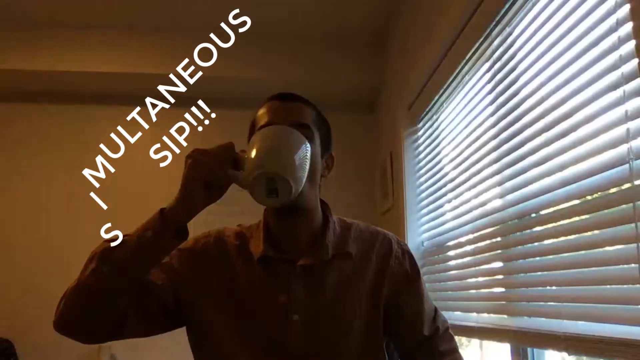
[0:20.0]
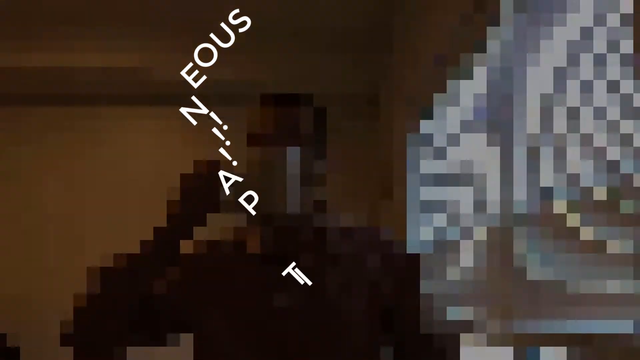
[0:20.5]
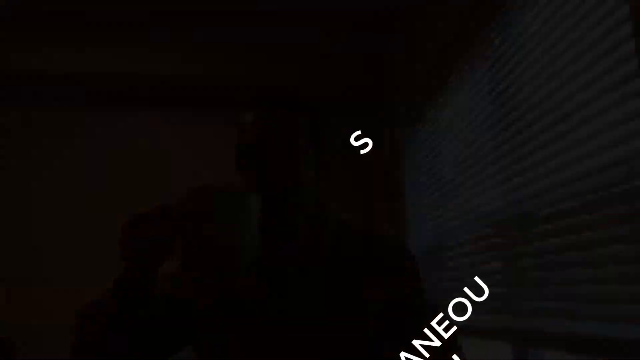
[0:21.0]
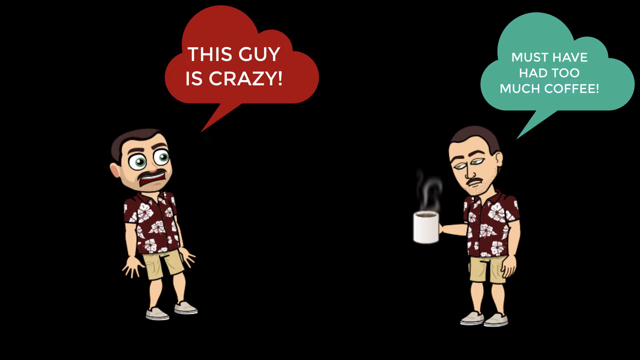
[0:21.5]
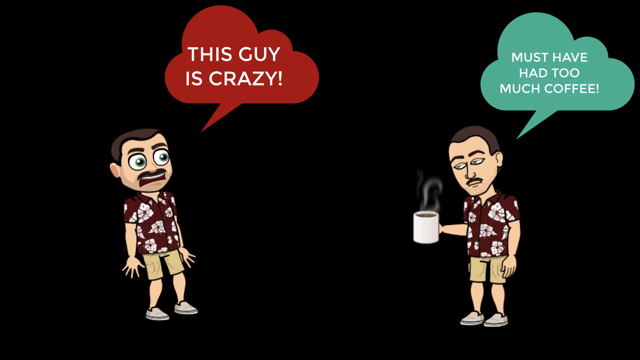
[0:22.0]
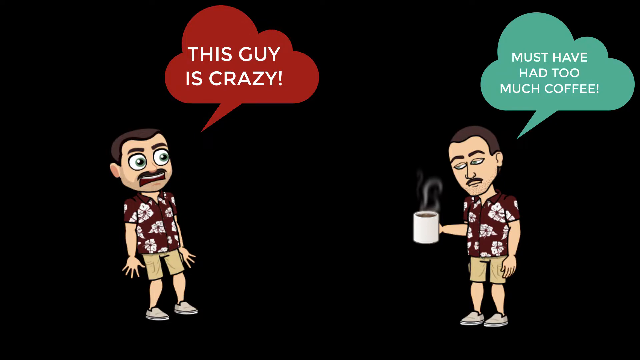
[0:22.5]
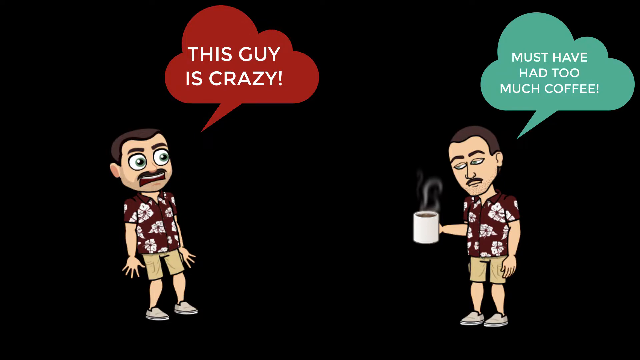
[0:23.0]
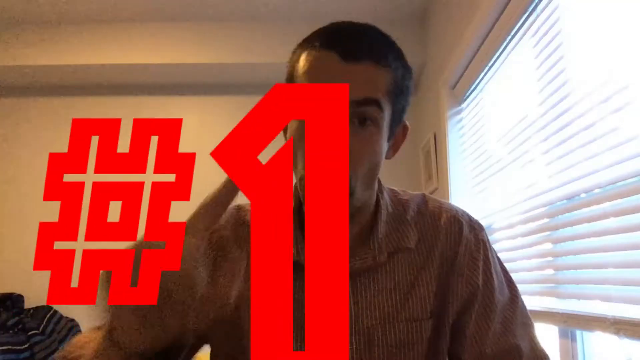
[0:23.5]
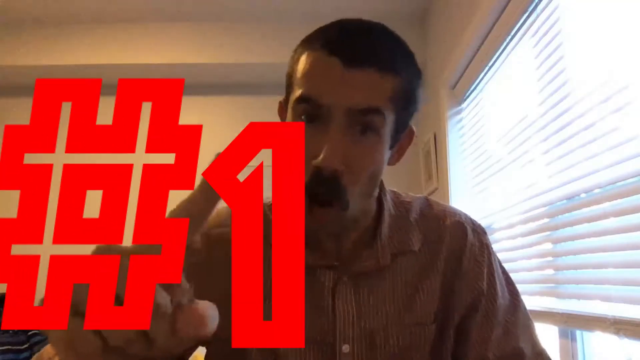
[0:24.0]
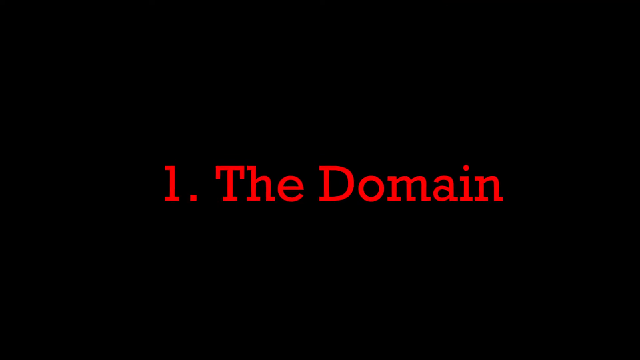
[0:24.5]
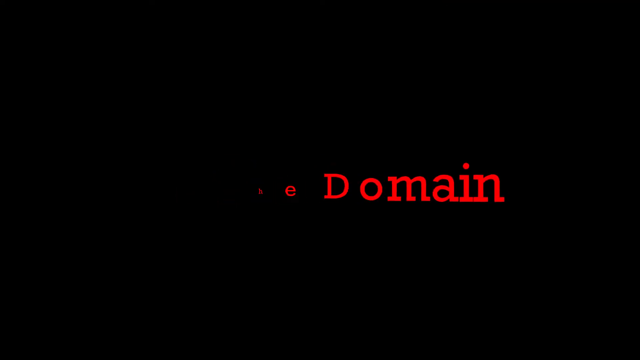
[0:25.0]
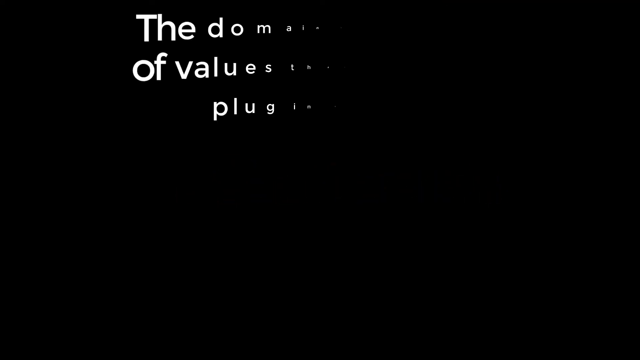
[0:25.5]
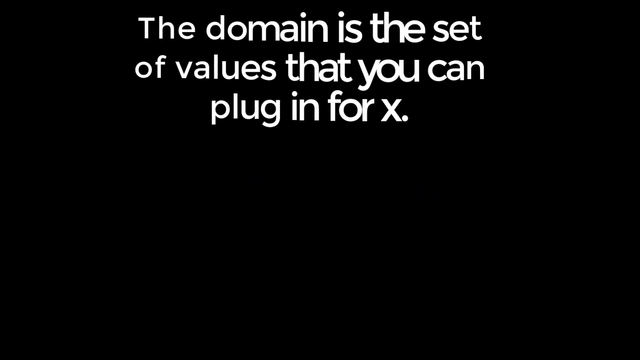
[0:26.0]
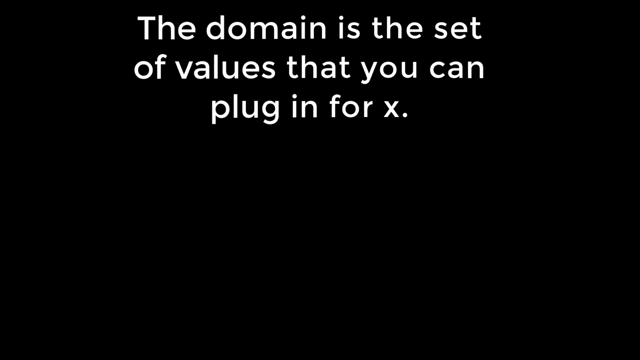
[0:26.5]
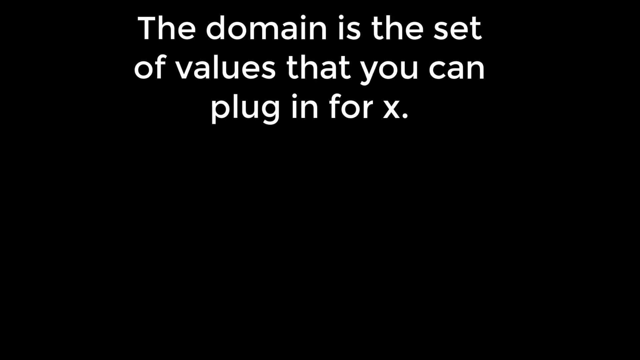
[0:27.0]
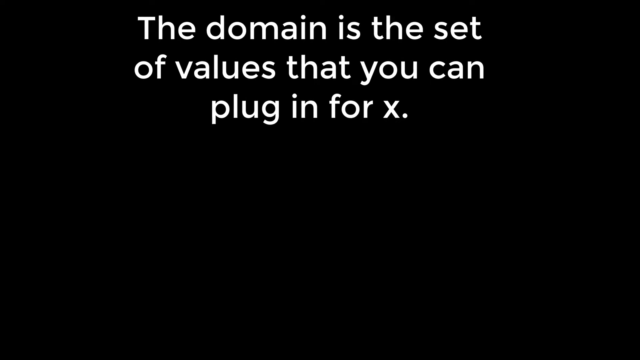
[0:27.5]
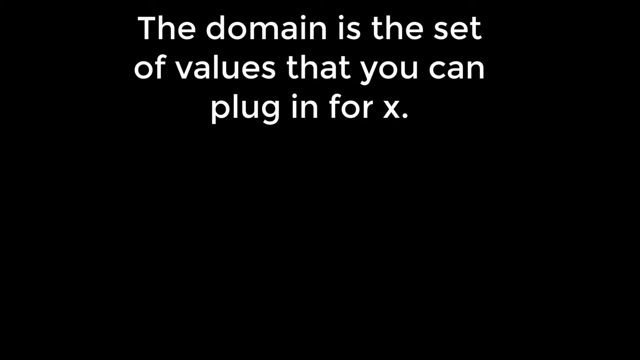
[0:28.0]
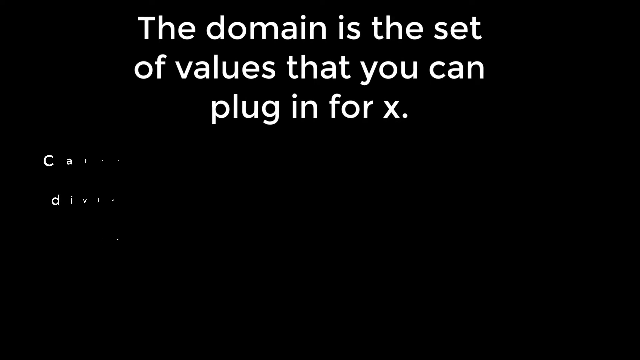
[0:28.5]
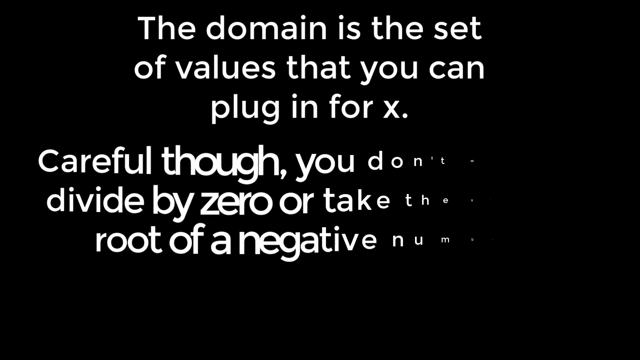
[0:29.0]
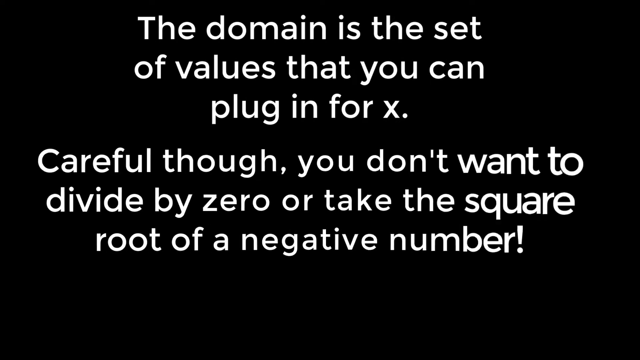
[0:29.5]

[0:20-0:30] The man drinks coffee as the screen fades to black. On a black background are two cartoonish figures that look exactly the same, both wearing Hawaiian shirts, khaki shorts and gray shoes, with brown hair and brown mustaches. The figure on the left looks at the right one, scared, with a thought bubble above him that says "this guy is crazy." The figure on the right looks down at a cup of coffee in his right hand, and his thought bubble says "must have had too much coffee." The scene transitions to a man in a room wearing a collared shirt, with a brown mustache and brown hair. A red number 1 appears on the left of the video as the man raises his right hand and points out his right index finger. Then, on a black background, red text says "1. The domain." That sentence disappears and is replaced by one that says "the domain is the set of values that you can plug in for x." Underneath, new sentences appear: "careful though, you don't want to divide by zero or take the square root of a negative number."